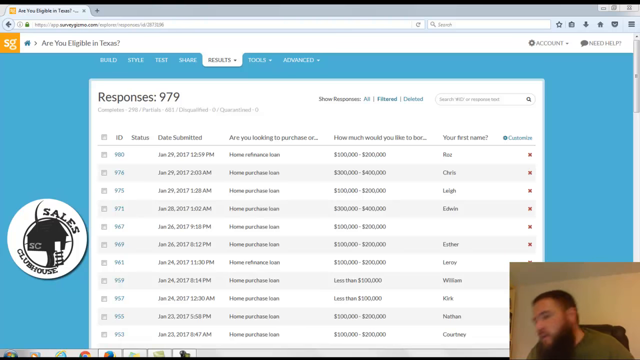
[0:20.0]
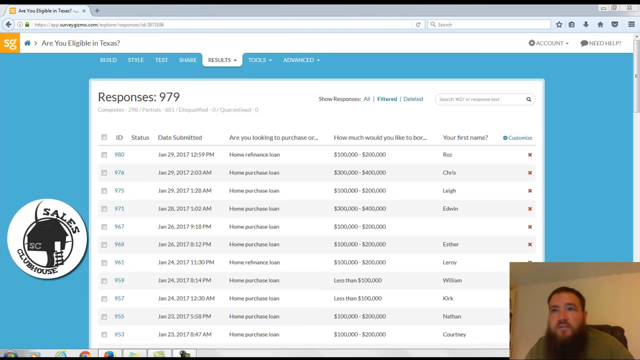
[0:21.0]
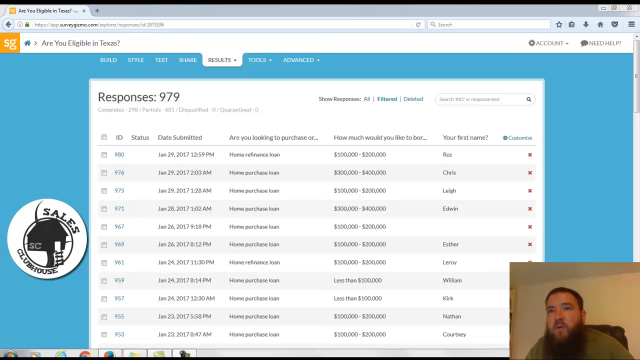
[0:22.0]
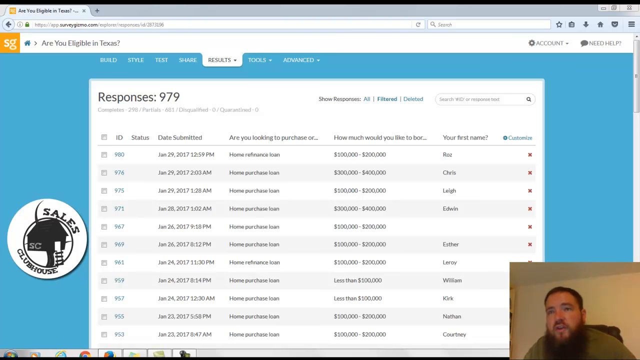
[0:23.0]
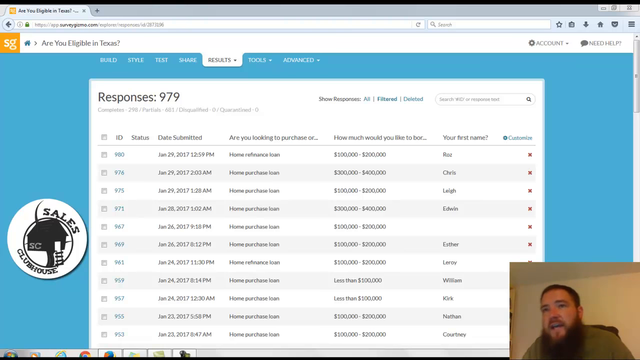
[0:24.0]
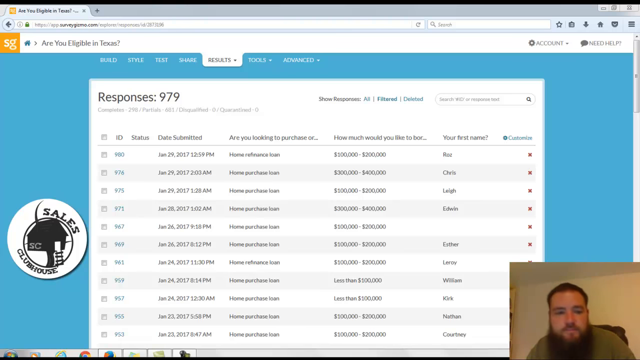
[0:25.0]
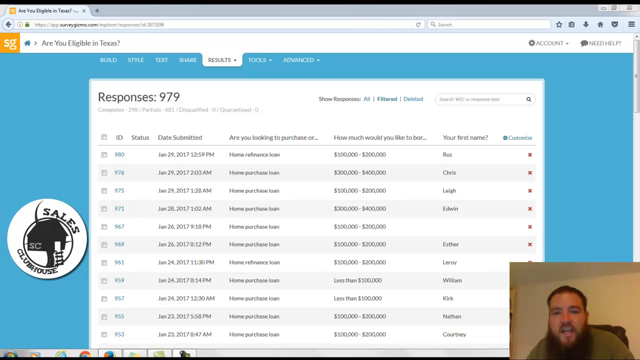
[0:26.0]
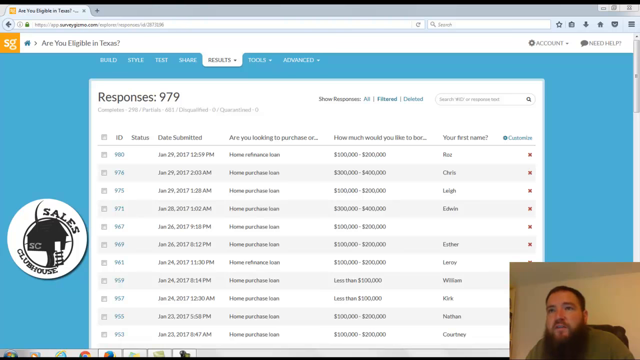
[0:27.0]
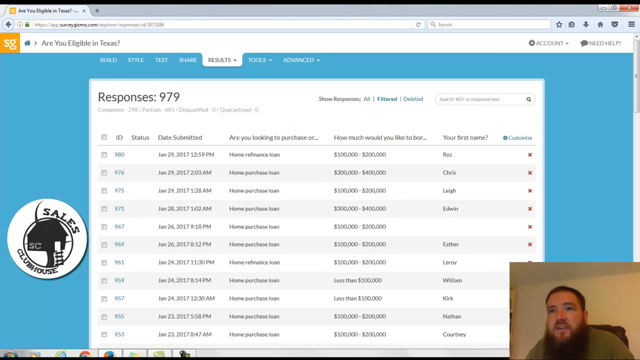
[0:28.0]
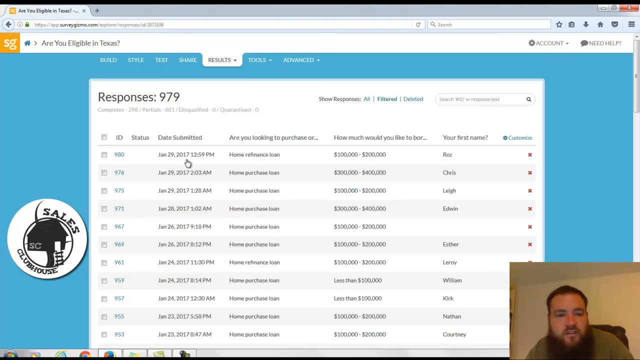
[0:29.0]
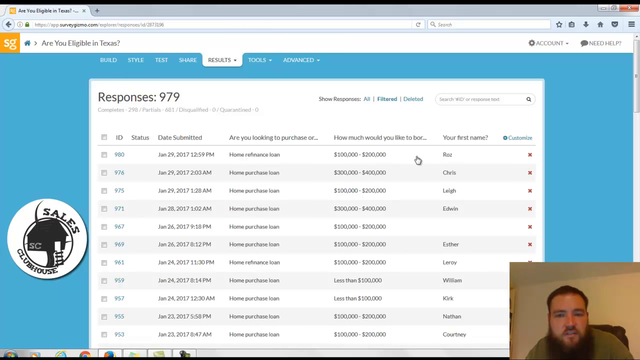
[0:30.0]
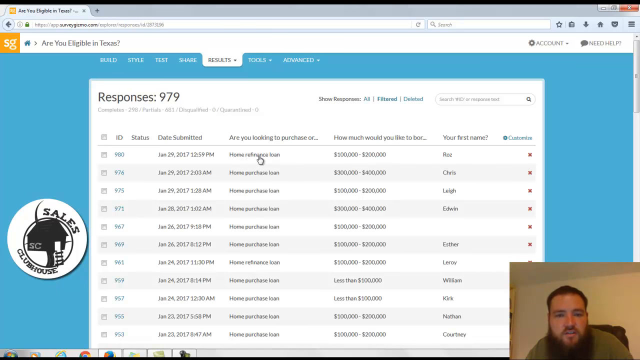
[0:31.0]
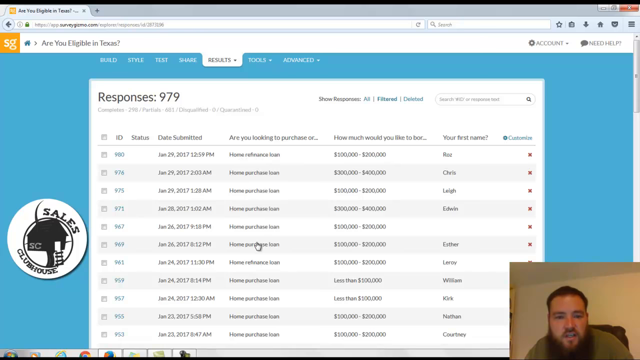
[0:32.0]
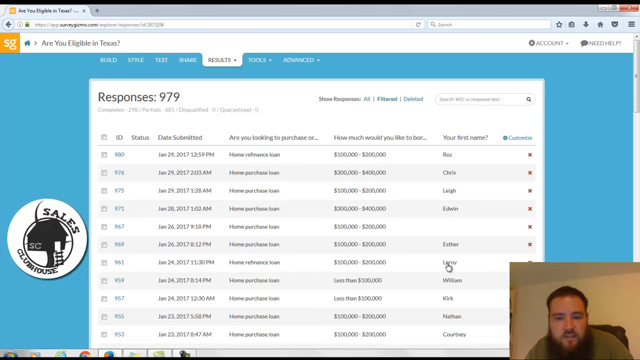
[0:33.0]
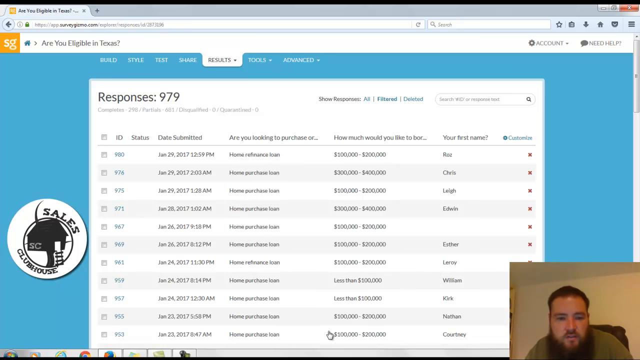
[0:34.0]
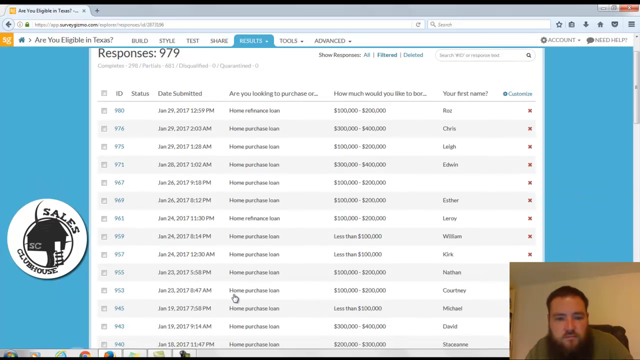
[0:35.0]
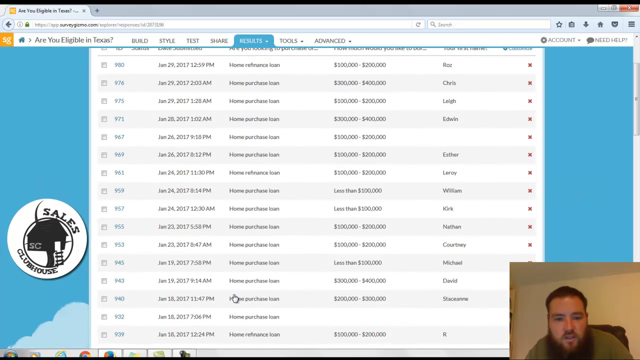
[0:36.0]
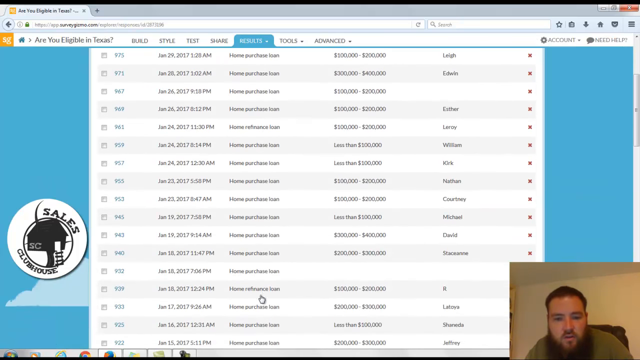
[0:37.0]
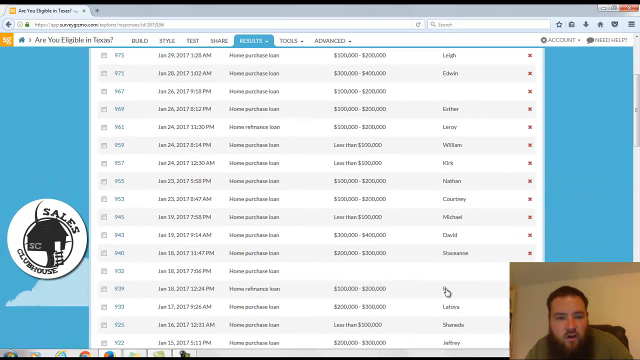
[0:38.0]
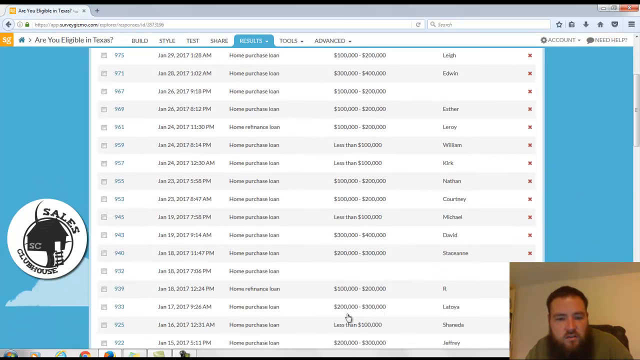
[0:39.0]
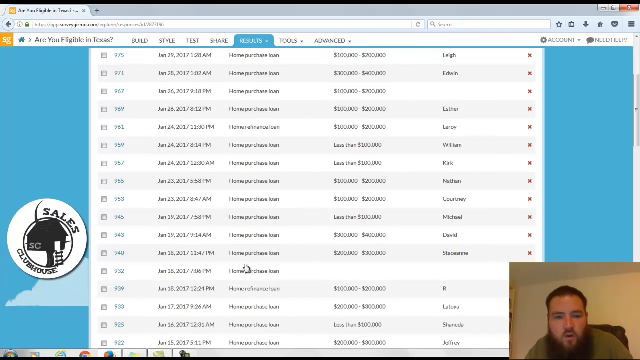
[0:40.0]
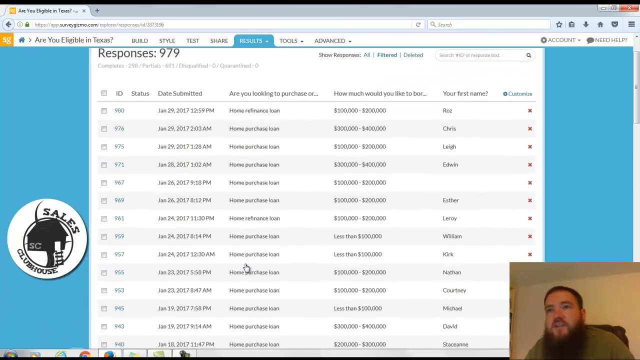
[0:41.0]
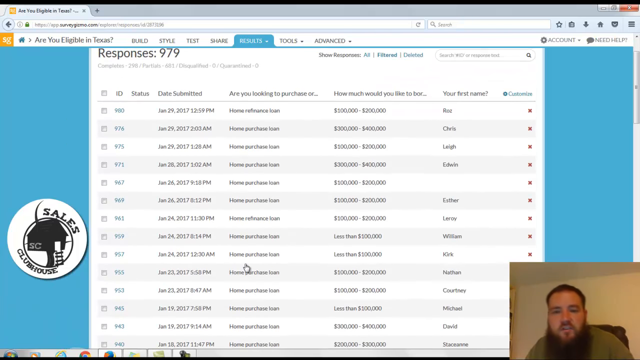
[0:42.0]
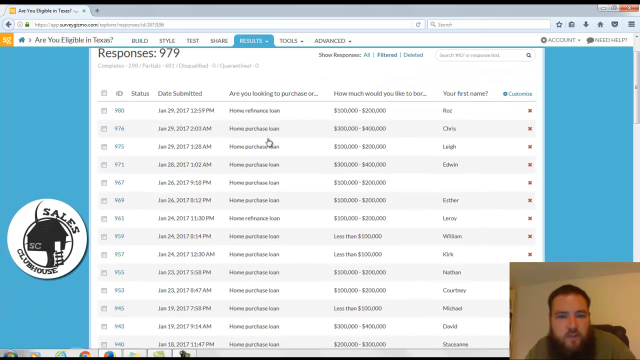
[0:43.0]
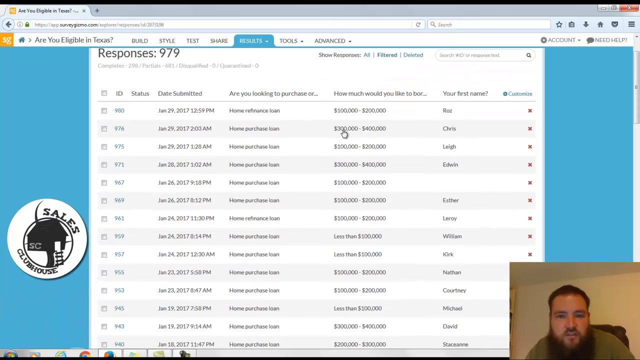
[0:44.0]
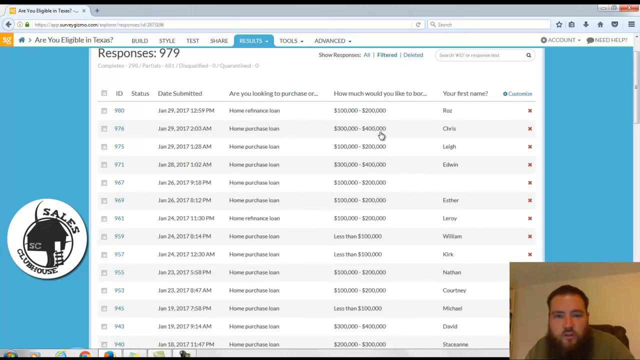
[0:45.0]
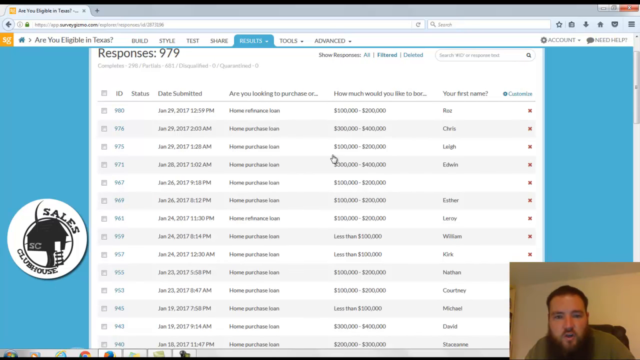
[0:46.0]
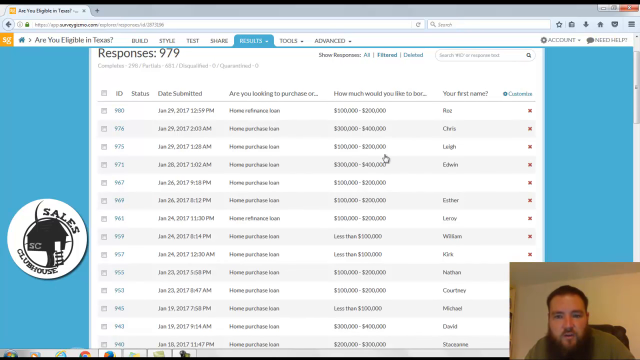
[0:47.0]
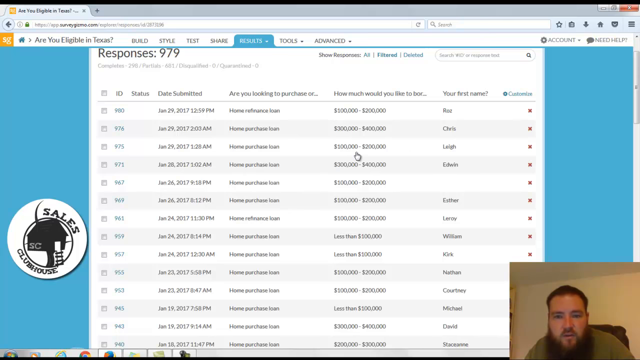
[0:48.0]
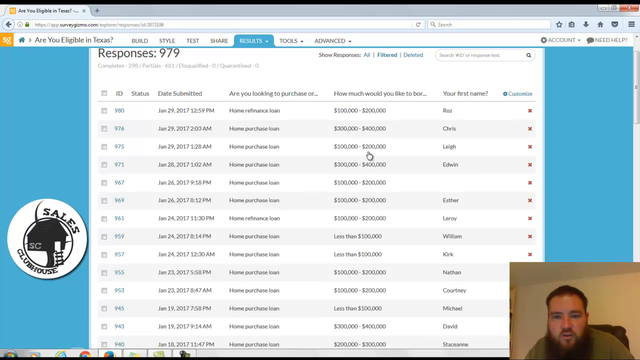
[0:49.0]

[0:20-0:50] A website with a table is shown, with "responses 979" at the top. The table has five columns headed "ID", "date submitted", "are you looking to purchase or...", "how much would you like to borrow..." and "your first name". At the bottom right is a Caucasian man with short hair and what looks like a very long, thick beard, wearing a pale green shirt and sitting on a black computer chair. He talks toward the camera while looking down toward the bottom left of his screen, moving the mouse a bit. At first he just talks, looking down and then a bit more toward the left. His cursor goes over the first entry, which reads "home purchase, refinance loan", then moves down the list; he scrolls down a little, goes down the third column, reaches the name "Ard", and goes back up the list. The cursor moves over the second entry, and under the how much would you like to borrow column he highlights the amount on the second row, "$300,000 to $400,000". On the third row he goes over the your first name column, which reads "Leah", and the amount "$100,000 to $200,000". On the fourth row the name reads "Edwin". He goes through the rows, apparently analyzing the numbers and names.